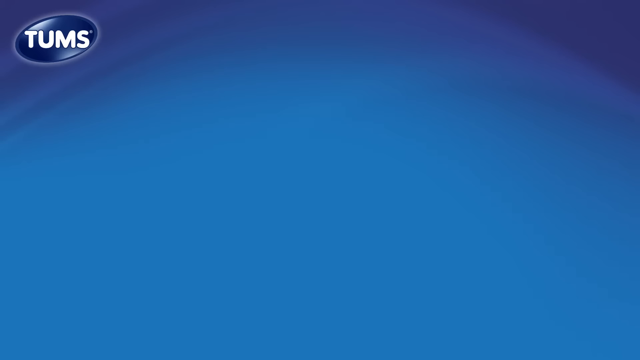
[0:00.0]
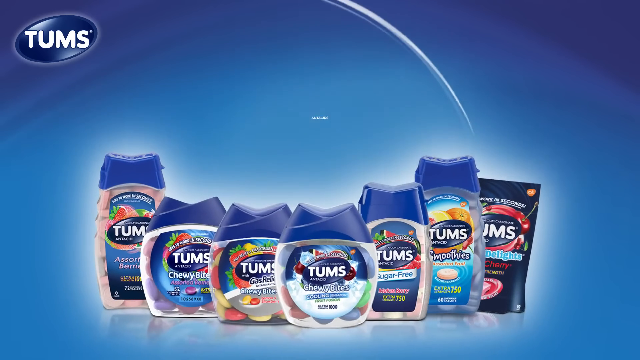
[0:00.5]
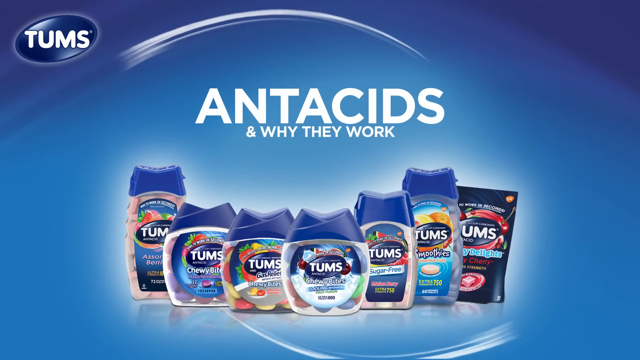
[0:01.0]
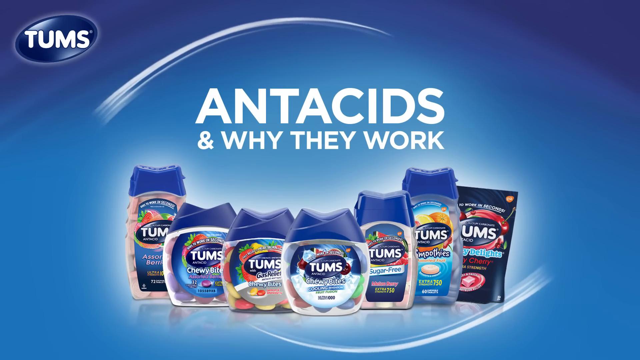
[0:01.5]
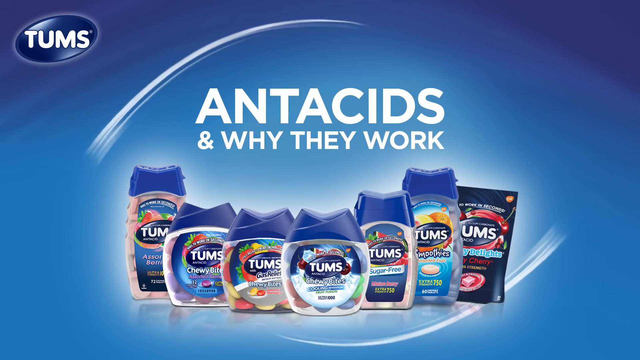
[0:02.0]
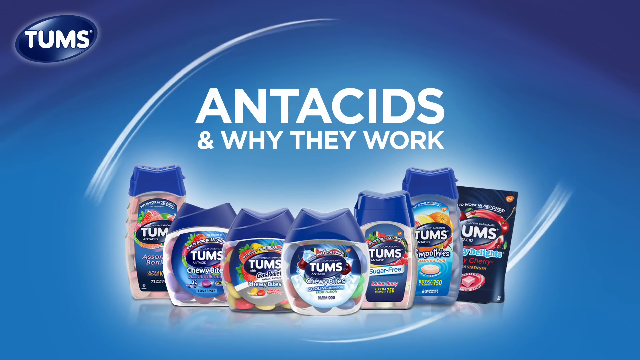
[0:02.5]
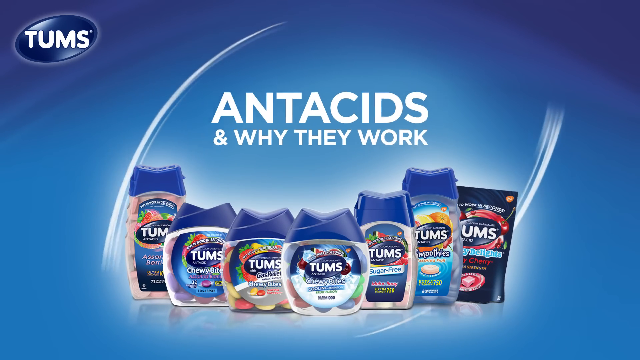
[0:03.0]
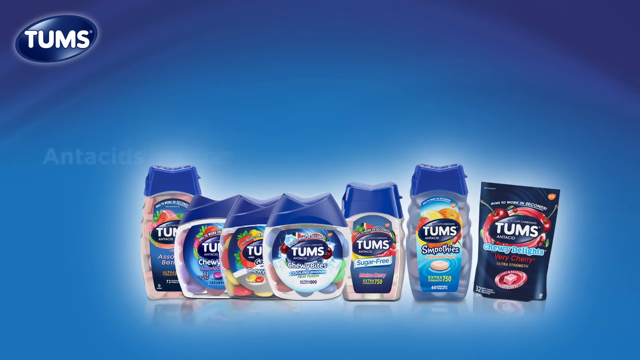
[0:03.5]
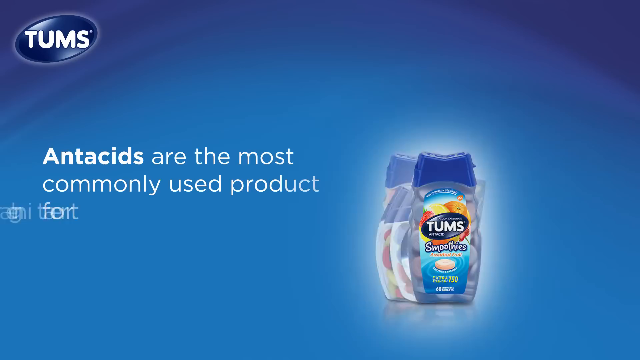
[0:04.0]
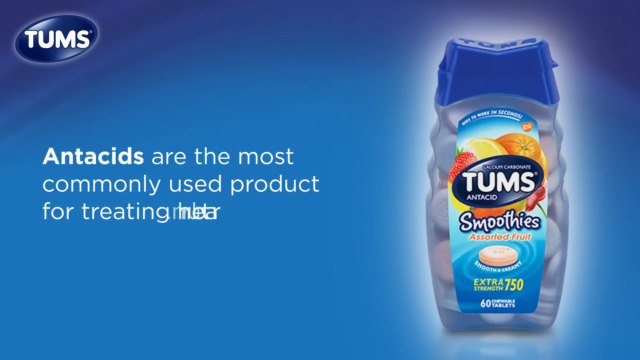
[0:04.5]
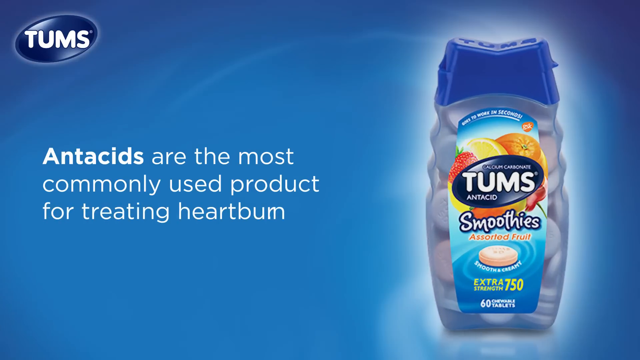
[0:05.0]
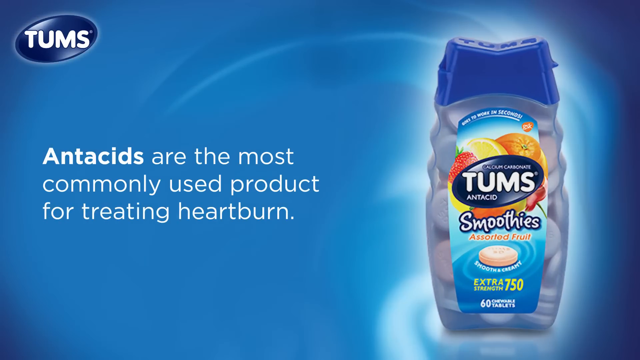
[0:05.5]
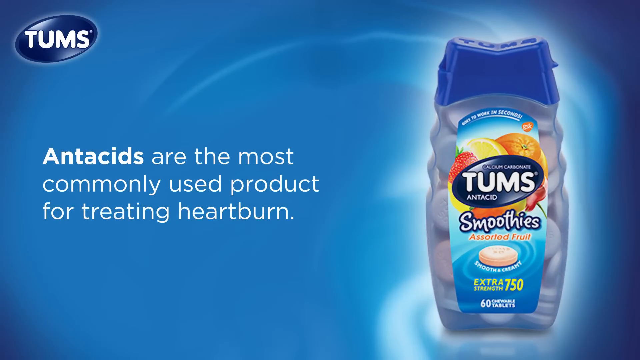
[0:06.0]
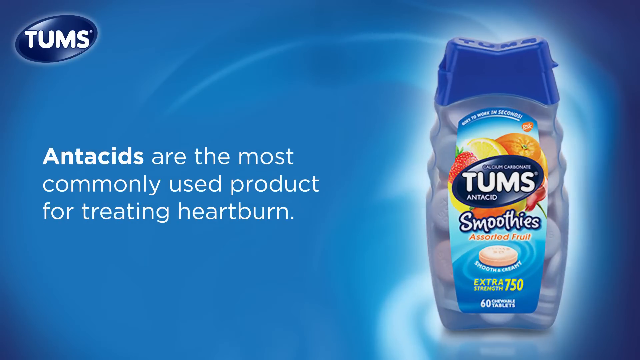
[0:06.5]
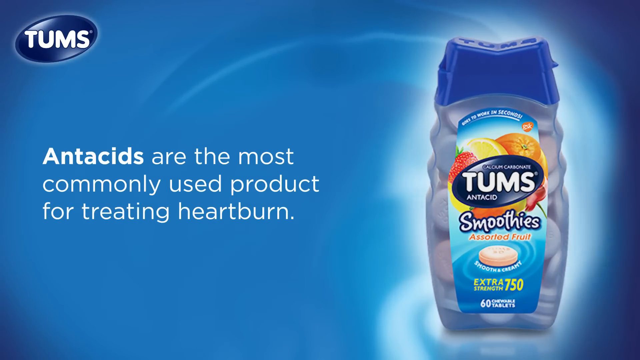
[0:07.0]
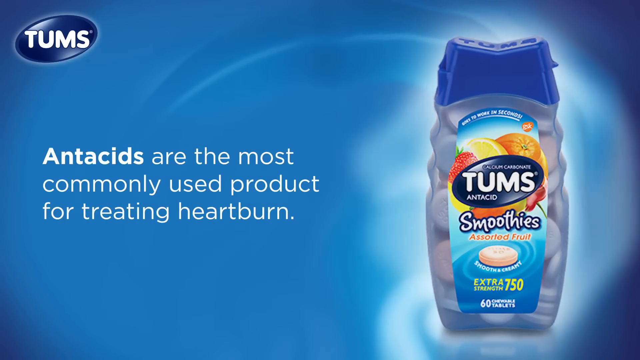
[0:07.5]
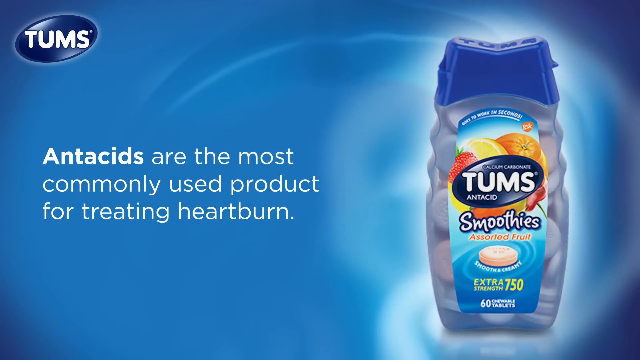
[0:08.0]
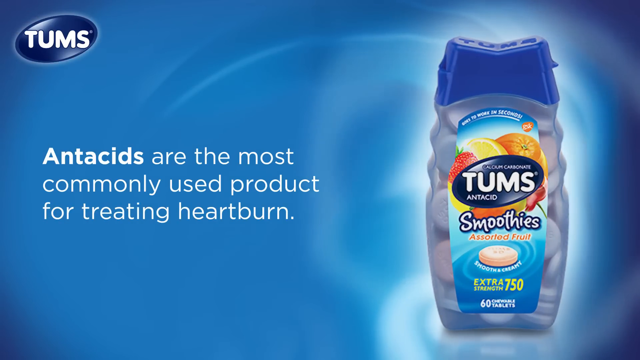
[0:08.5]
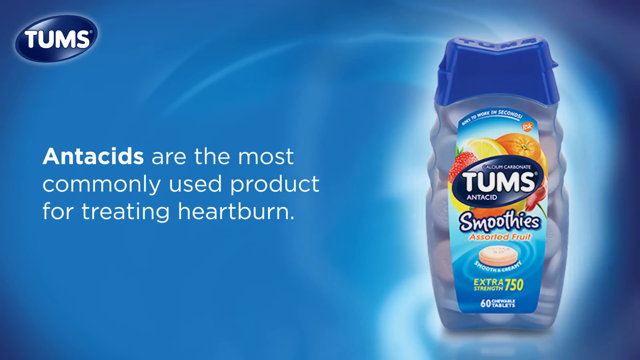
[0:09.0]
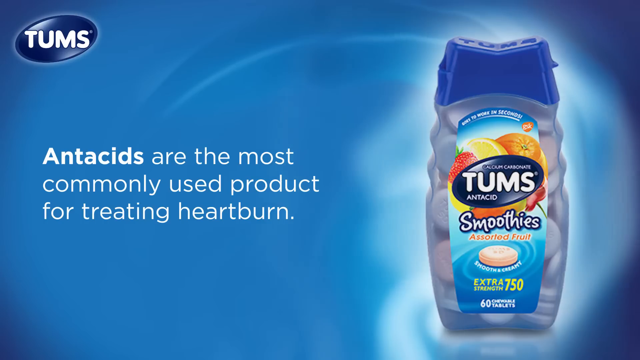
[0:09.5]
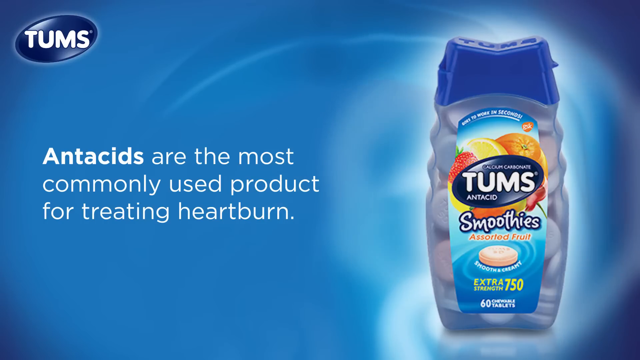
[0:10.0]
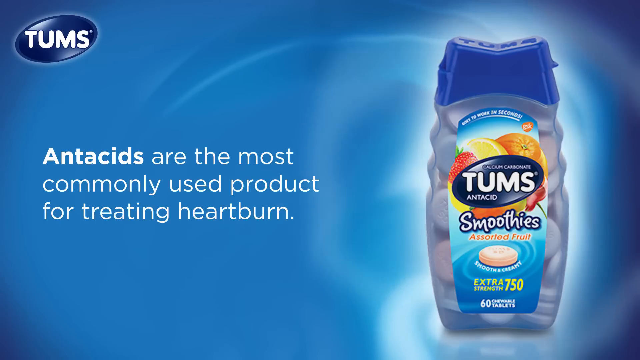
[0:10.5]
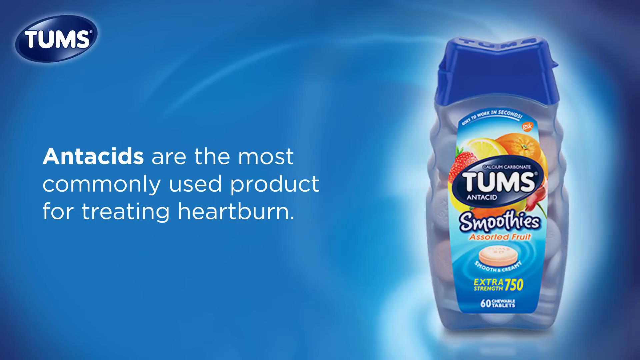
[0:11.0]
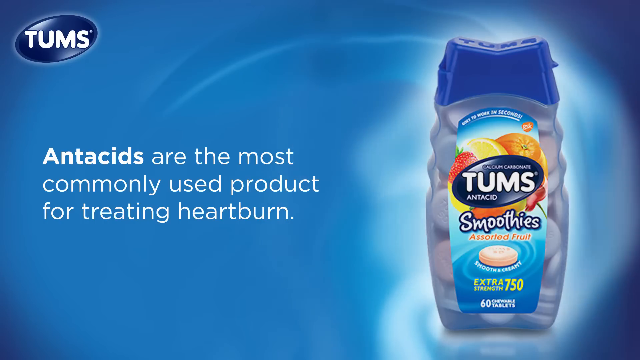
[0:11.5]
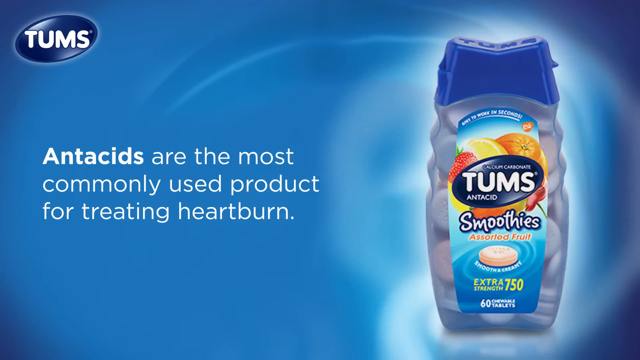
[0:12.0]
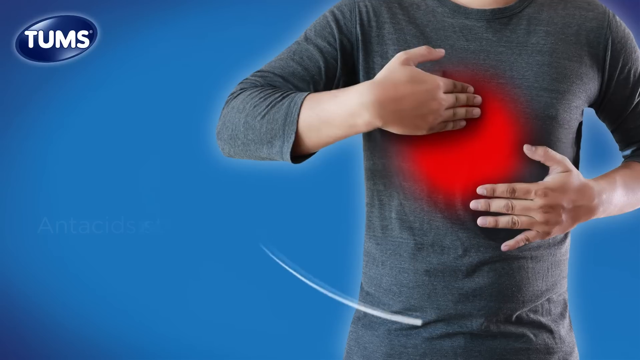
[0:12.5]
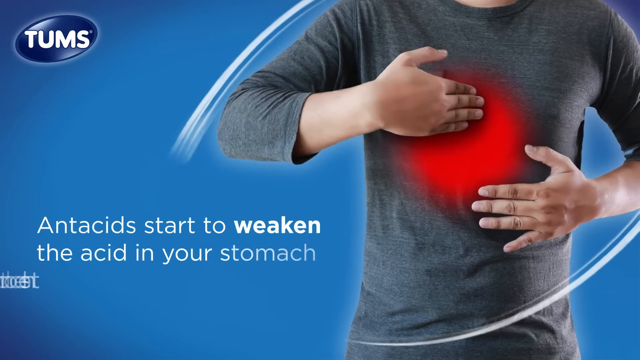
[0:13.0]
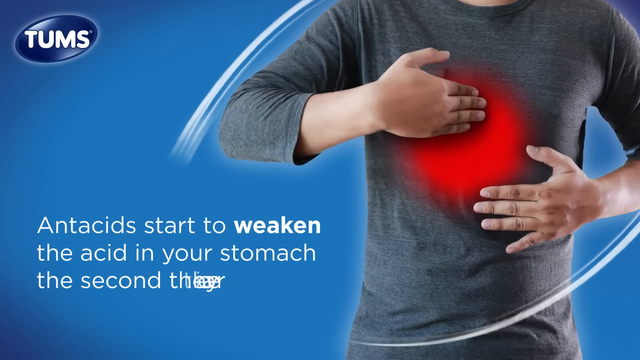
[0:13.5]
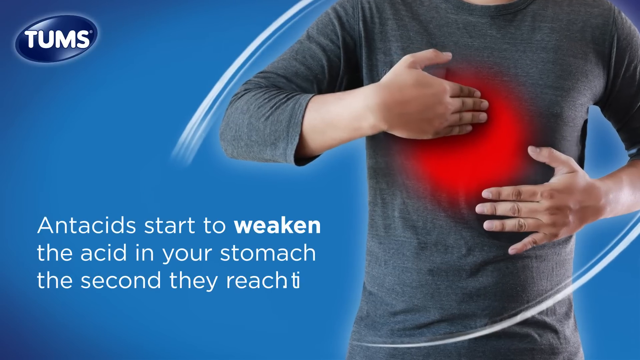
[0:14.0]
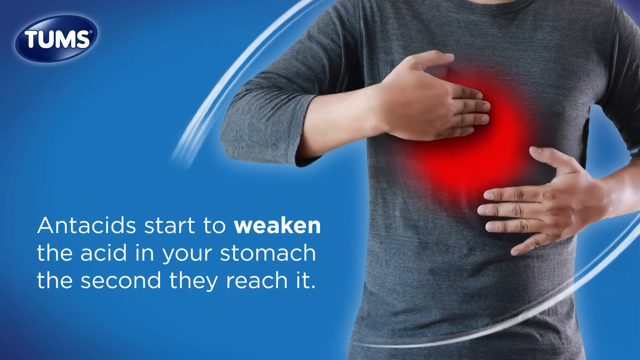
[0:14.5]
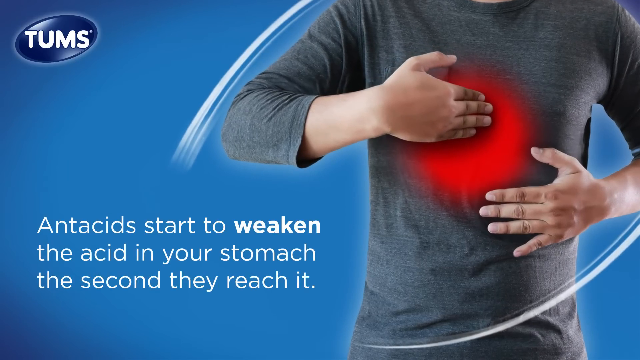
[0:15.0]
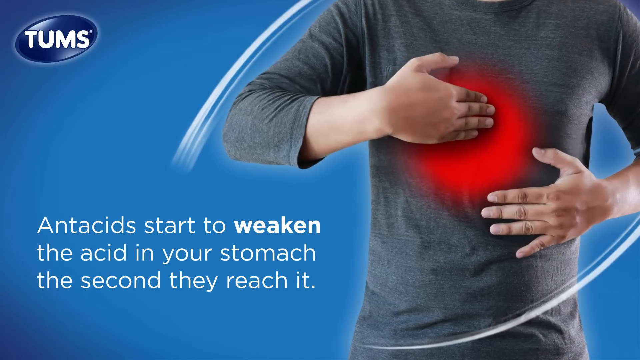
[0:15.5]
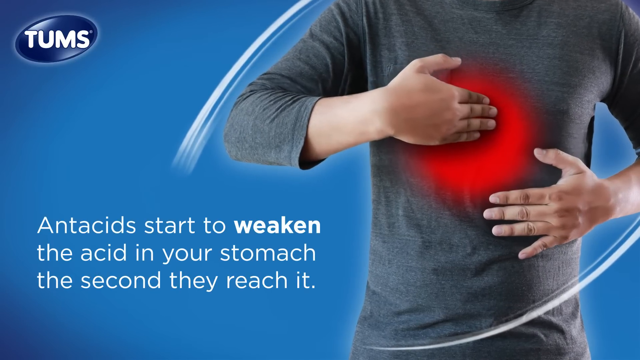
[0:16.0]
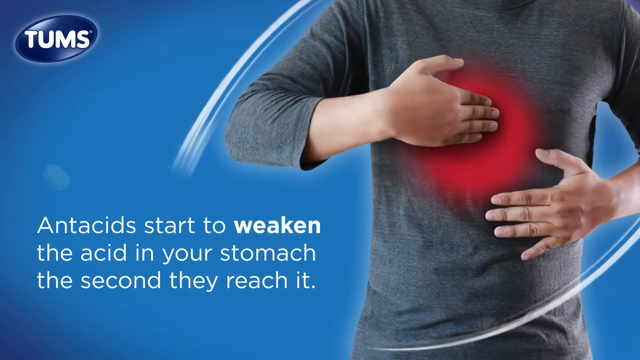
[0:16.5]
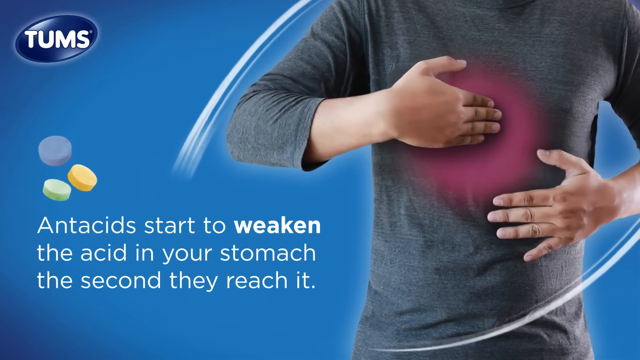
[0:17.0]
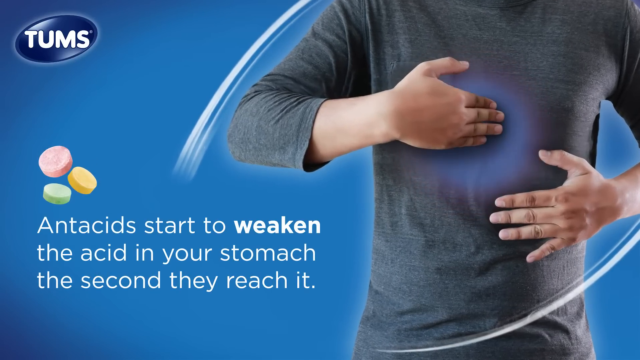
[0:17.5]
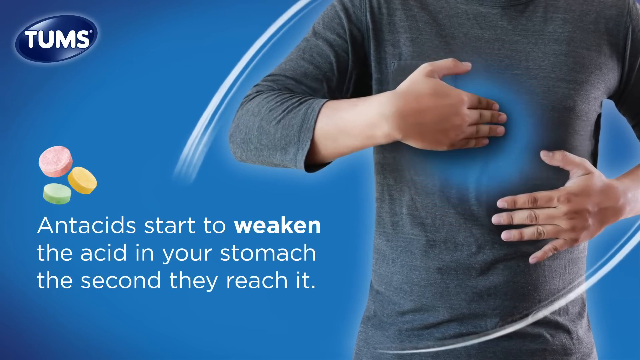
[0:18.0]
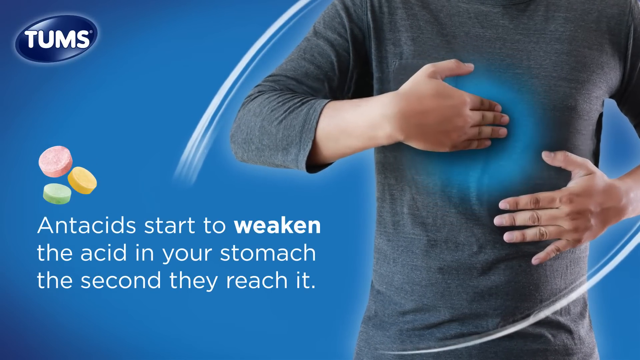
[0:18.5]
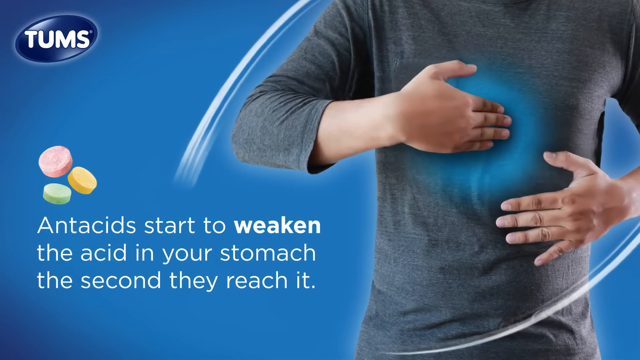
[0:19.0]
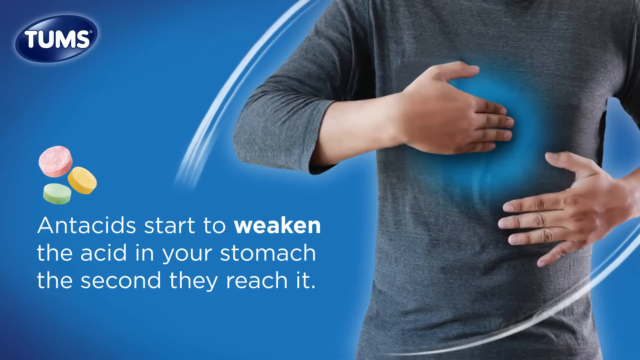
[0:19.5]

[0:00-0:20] The Tums name, T-U-M-S, is at the top left, and the logo has a blue background. All of the Tums products pop up, and text reads "antacids and why they work." The products shown at the bottom merge together. Tums Smoothies then appear, along with white text reading "antacids are the most commonly used product for treating heartburn"; the background is still blue, and the Smoothies Tums pulsate at the bottom. A new scene follows, with the Tums logo still at the top and the same blue background. Someone points to their stomach, which is marked by a hot spot, like a red spot on their shirt. With text reading "antacids start to weaken the acid in your stomach the second they reach it," the red turns to blue, and a picture of three antacid tablets pops up over the text.